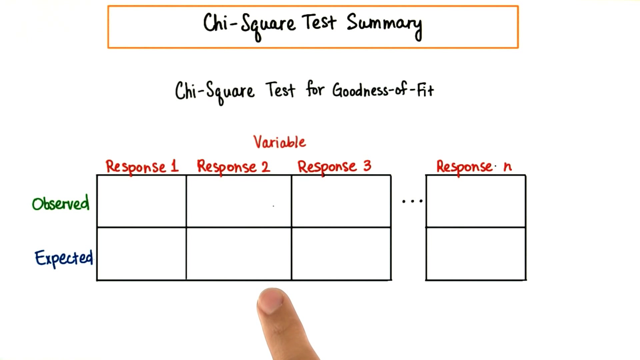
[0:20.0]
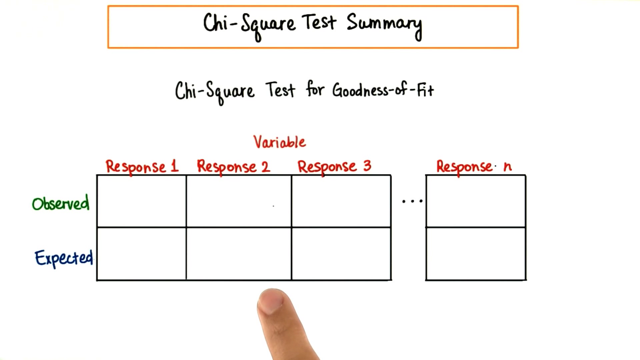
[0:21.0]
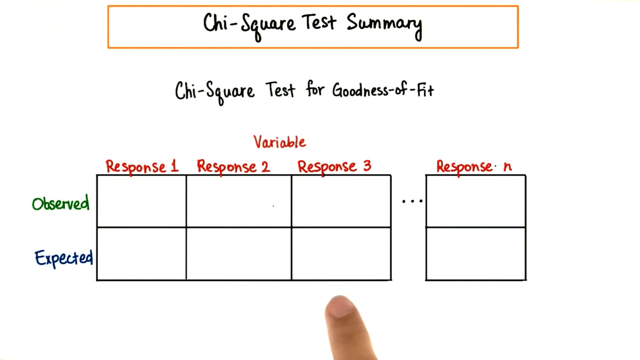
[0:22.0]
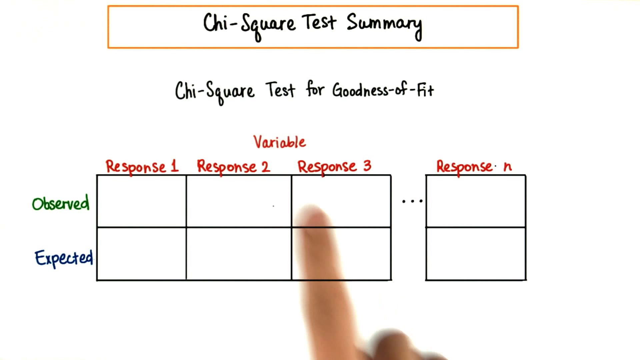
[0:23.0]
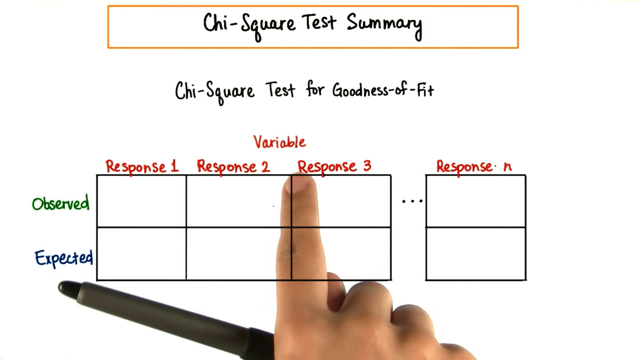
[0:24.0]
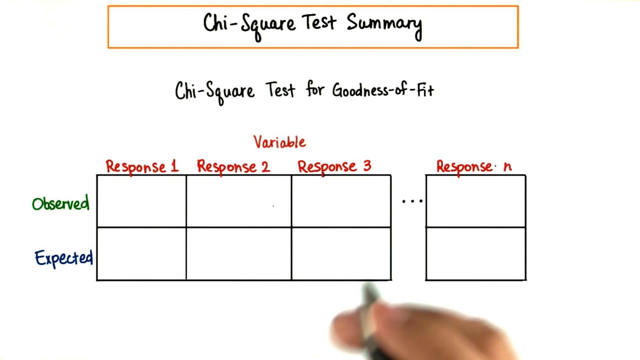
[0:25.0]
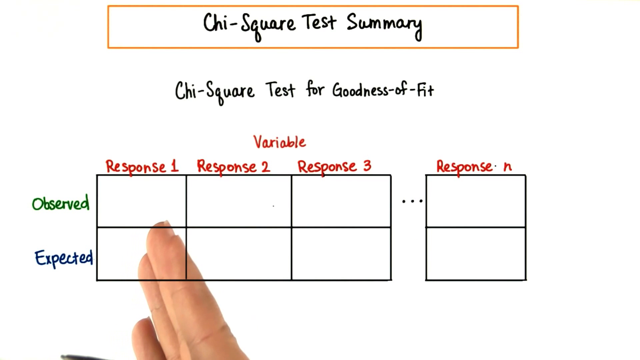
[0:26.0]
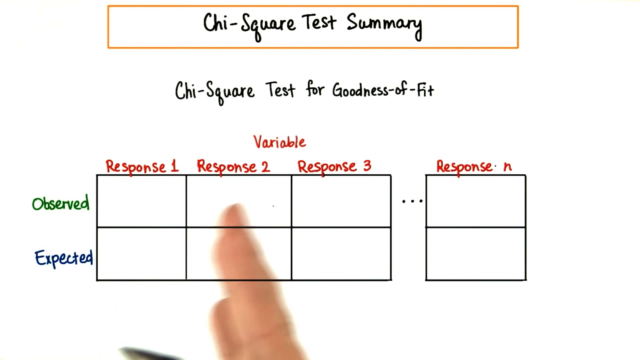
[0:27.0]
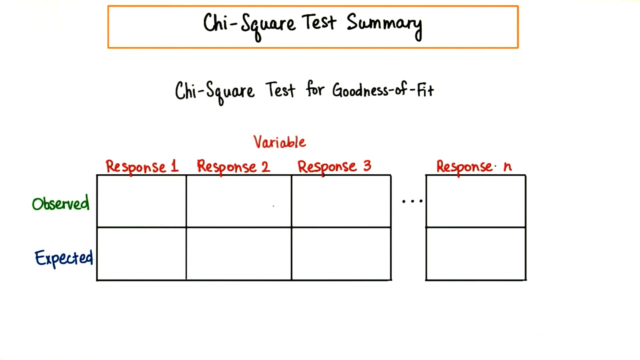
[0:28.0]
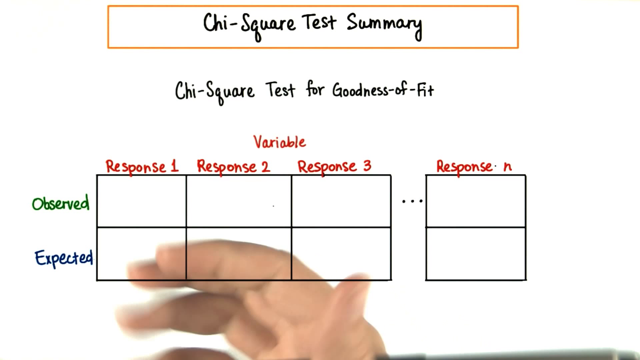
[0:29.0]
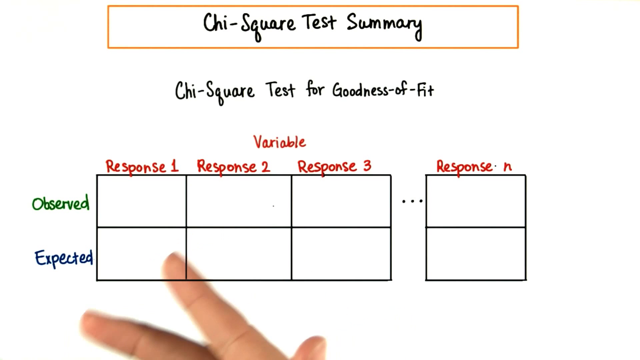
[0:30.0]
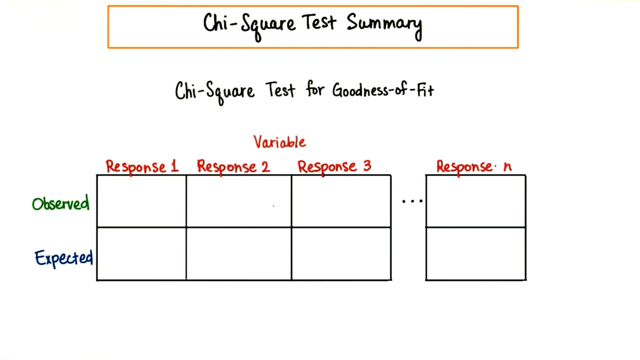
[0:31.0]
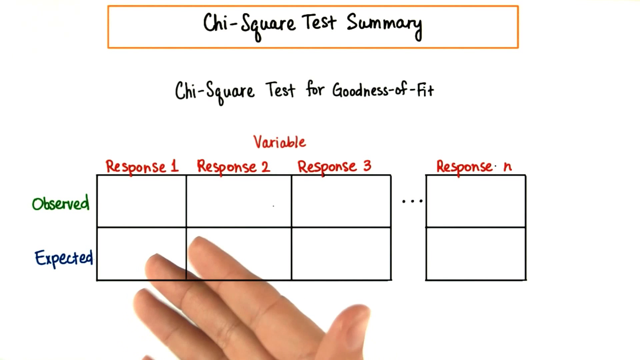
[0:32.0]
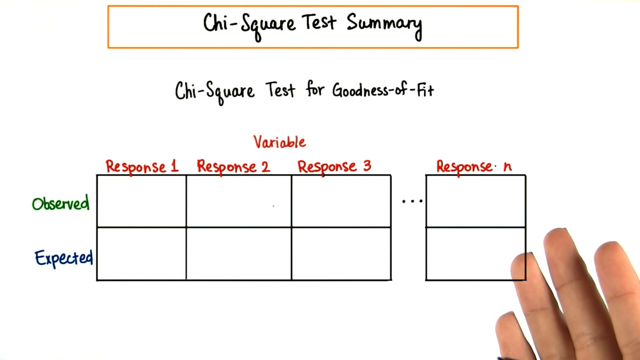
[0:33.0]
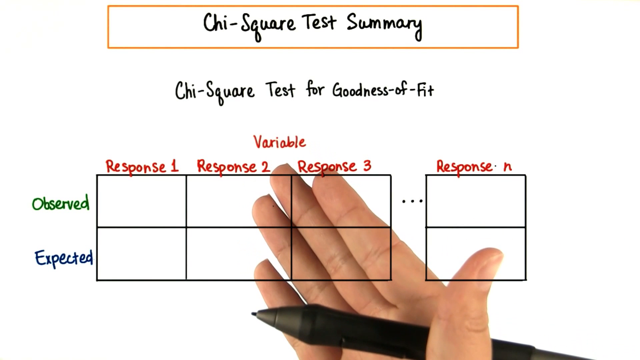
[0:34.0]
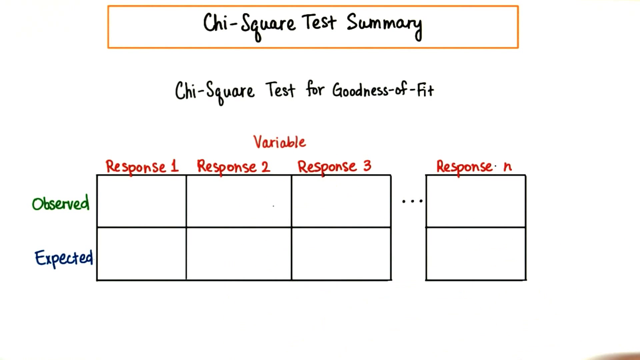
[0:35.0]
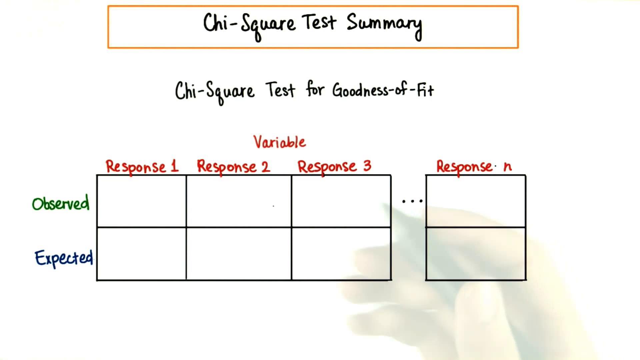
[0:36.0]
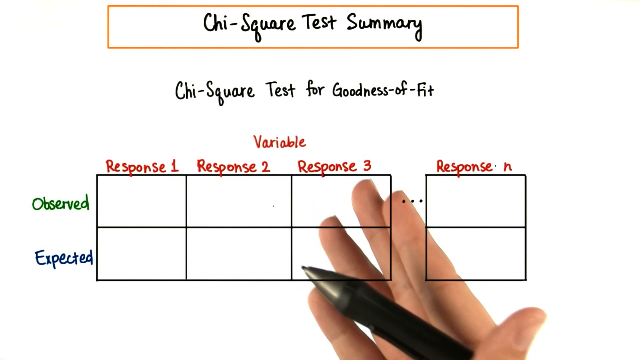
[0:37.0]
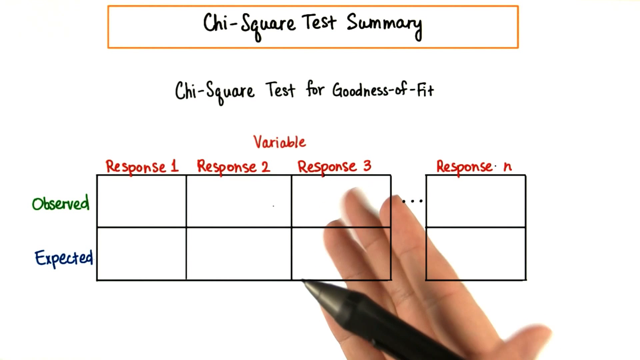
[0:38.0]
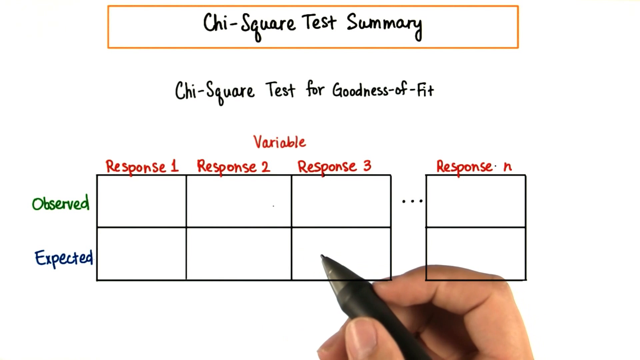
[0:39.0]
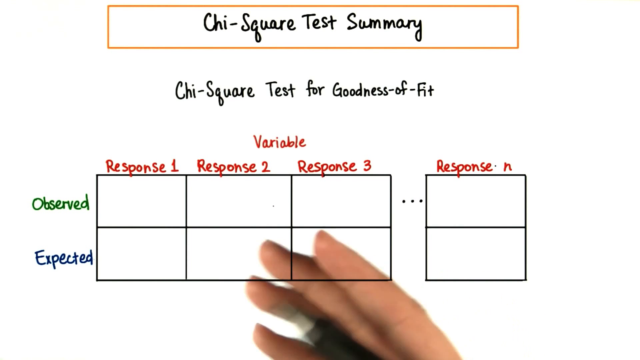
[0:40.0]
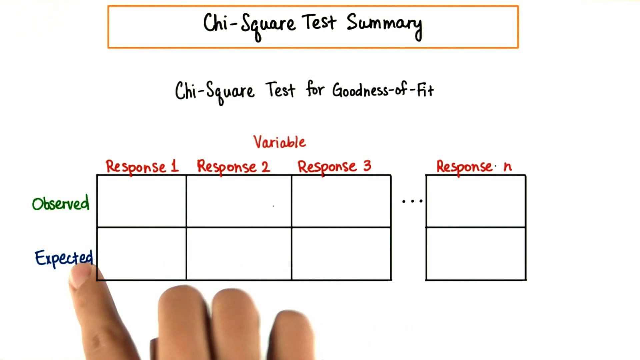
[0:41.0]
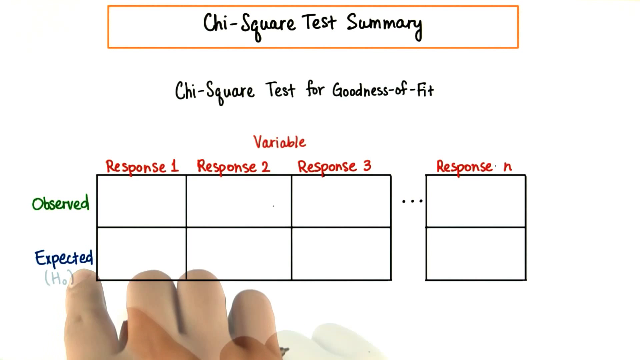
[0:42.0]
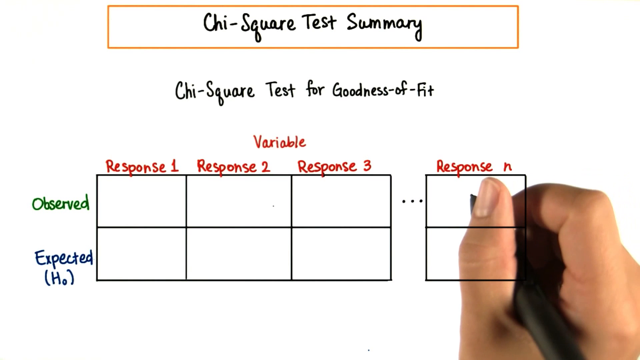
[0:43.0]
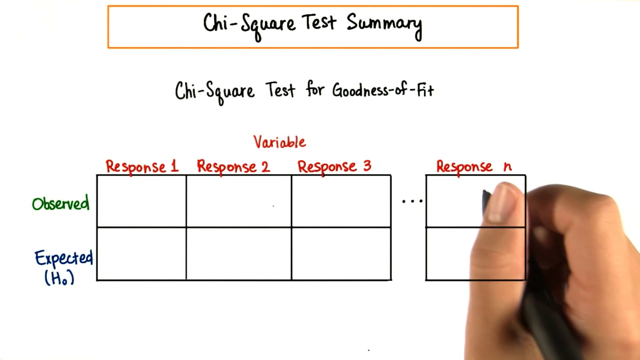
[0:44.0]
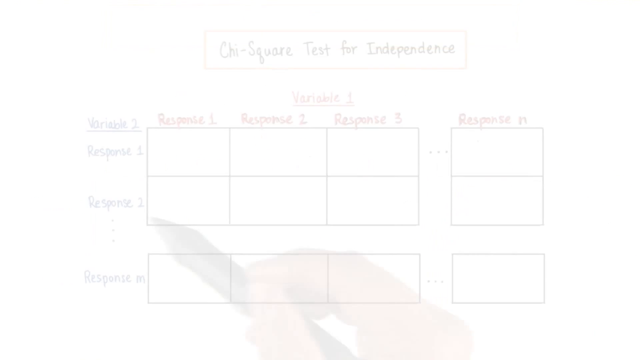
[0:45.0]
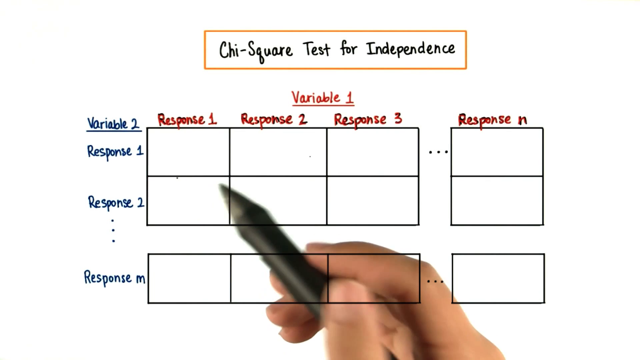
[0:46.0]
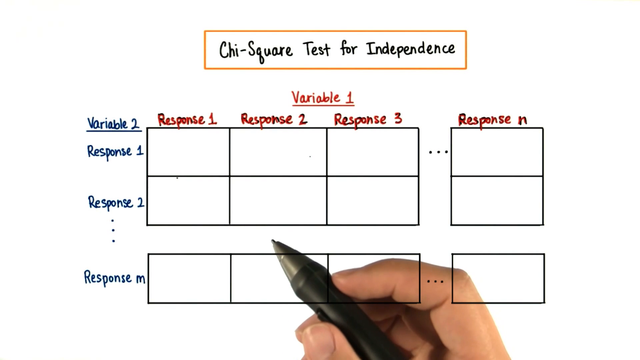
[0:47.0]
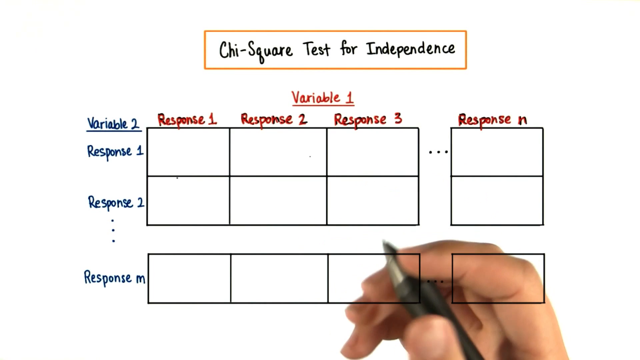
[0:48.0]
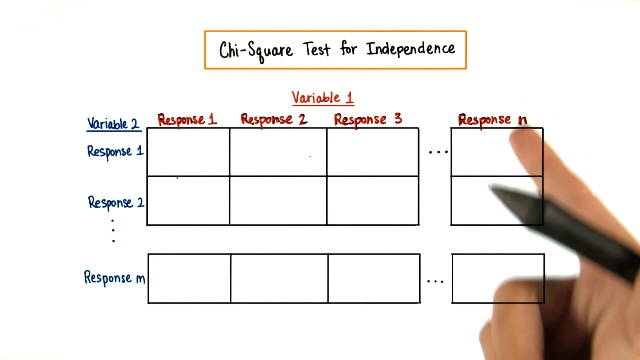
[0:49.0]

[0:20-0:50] The same person continues pointing out different parts of the graph. First they point out the bottom part, then point to "response one". The bottom part of the picture seems to be labeled "Variable" at the top, with columns for "response one", "response two", "response three" and "response N", and two rows, "observed" and "expected". Nothing is written in them yet. The view then moves to another screen showing a slightly different graph or data table, where instead of "observed" and "expected" the rows read "response one", "response two", "response three" and "response N".